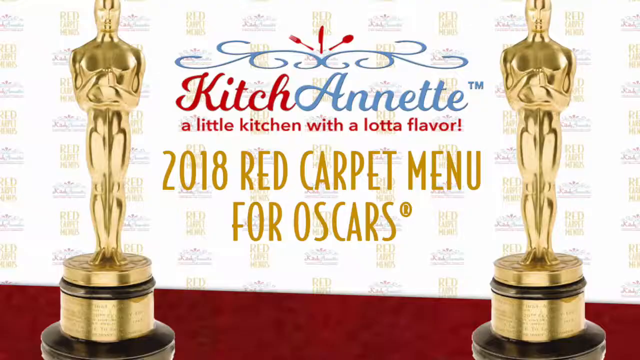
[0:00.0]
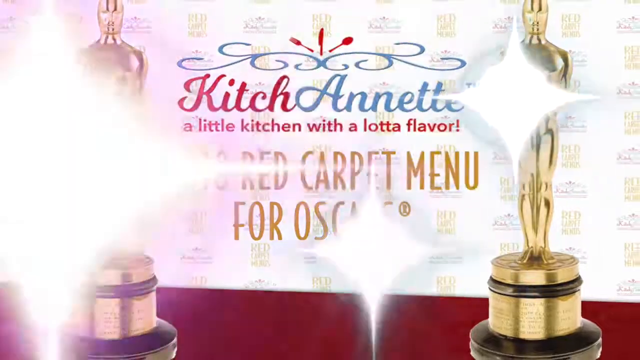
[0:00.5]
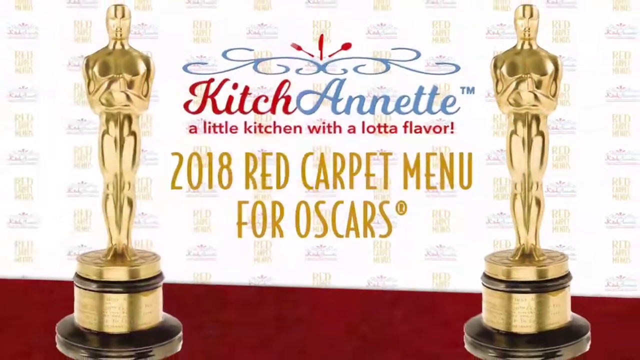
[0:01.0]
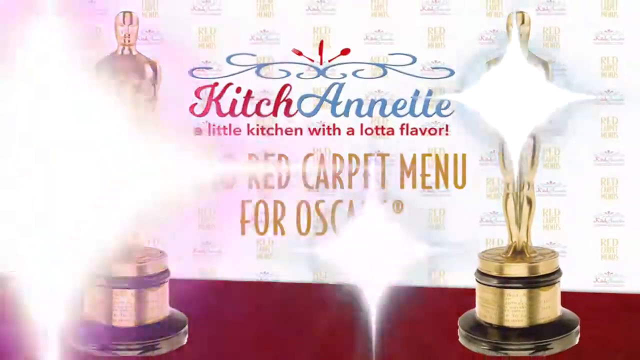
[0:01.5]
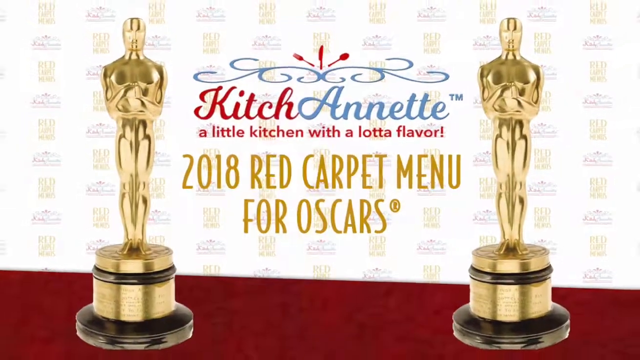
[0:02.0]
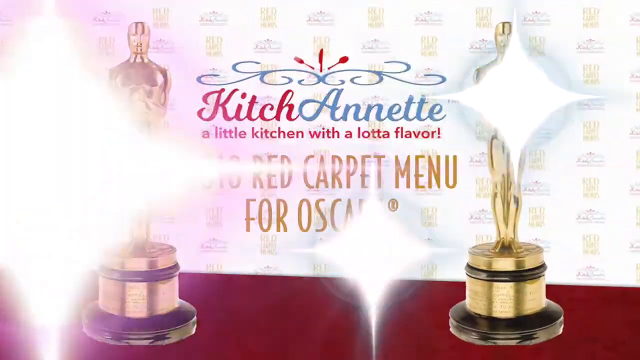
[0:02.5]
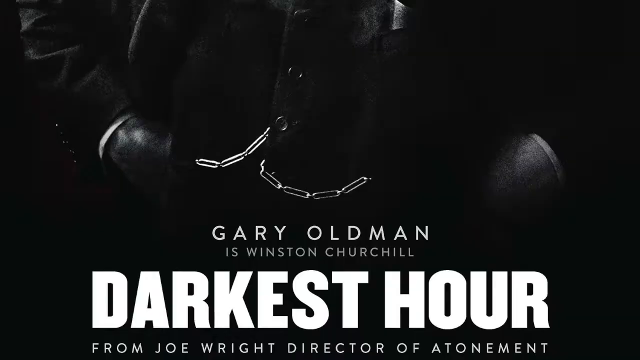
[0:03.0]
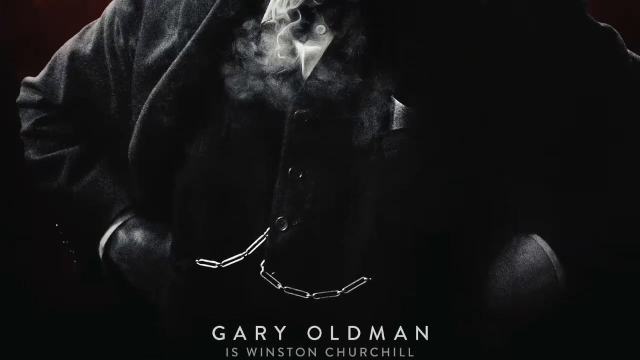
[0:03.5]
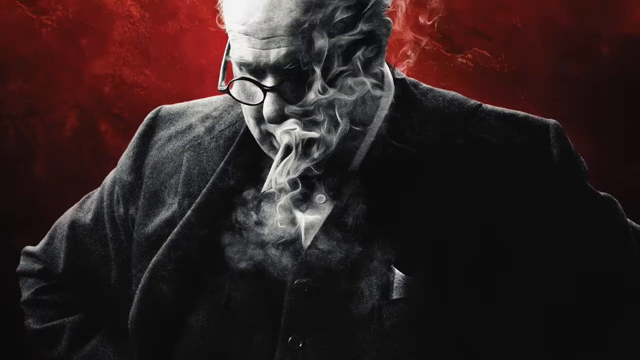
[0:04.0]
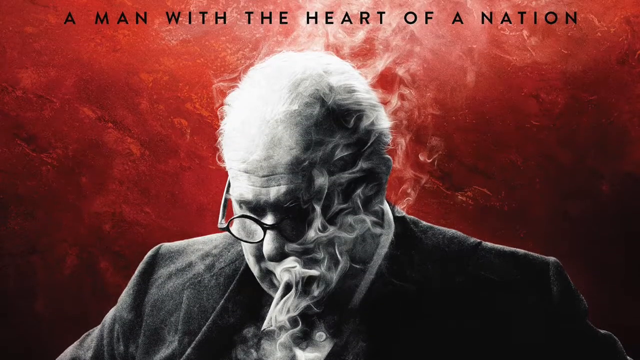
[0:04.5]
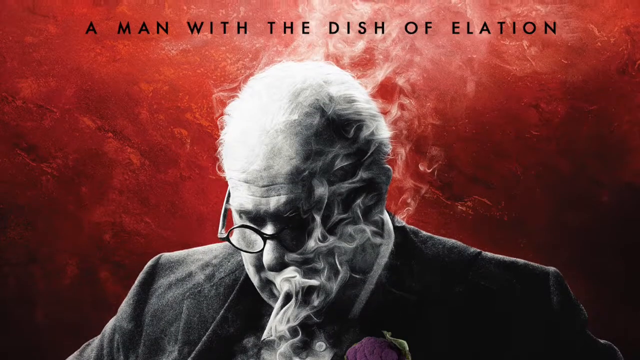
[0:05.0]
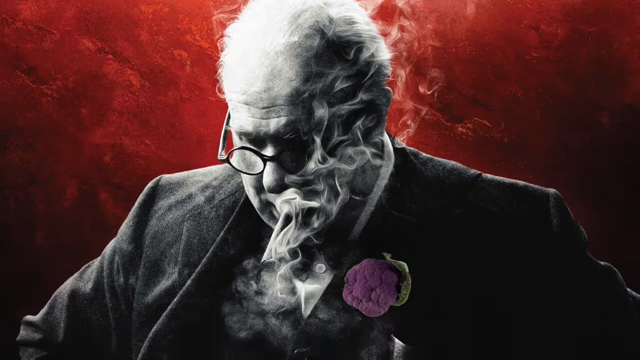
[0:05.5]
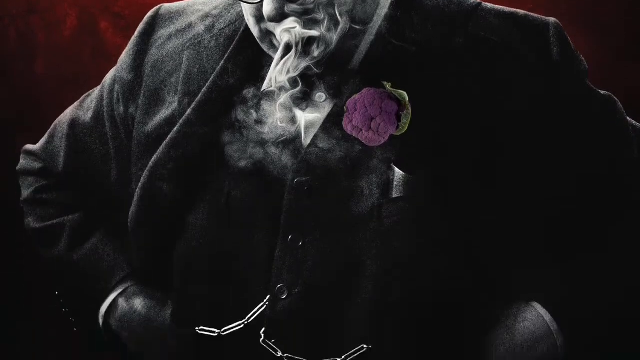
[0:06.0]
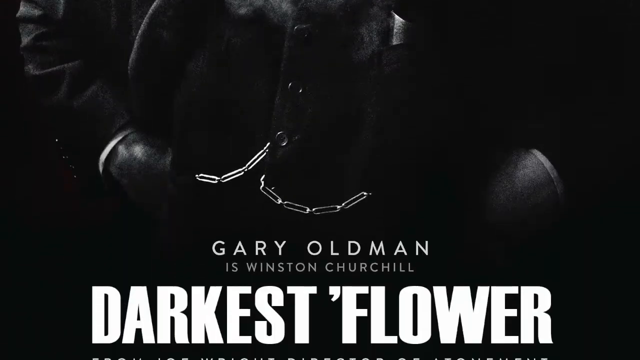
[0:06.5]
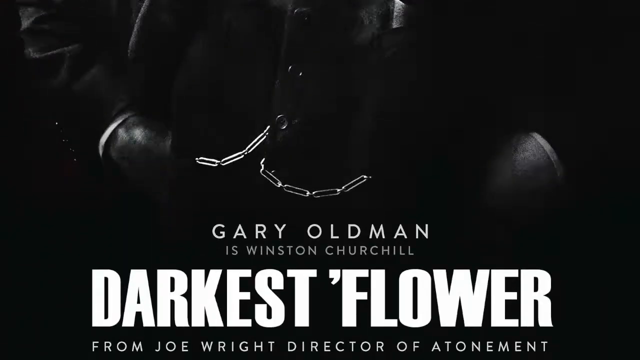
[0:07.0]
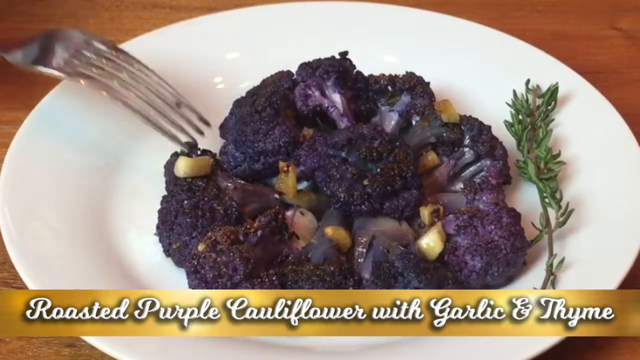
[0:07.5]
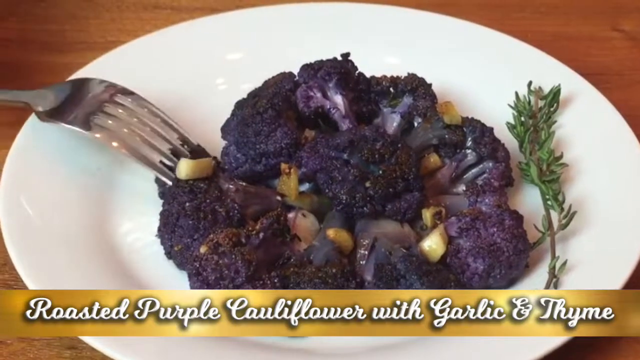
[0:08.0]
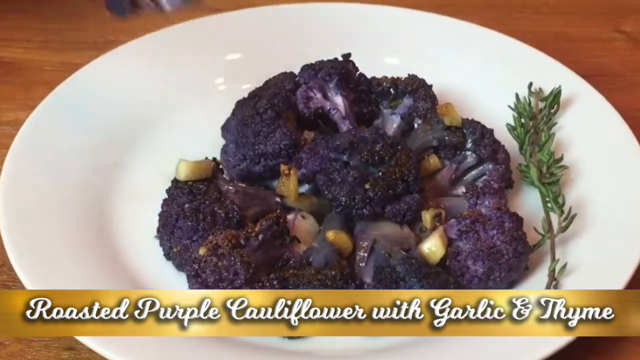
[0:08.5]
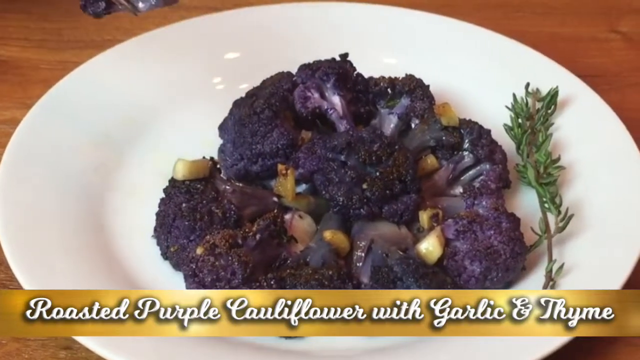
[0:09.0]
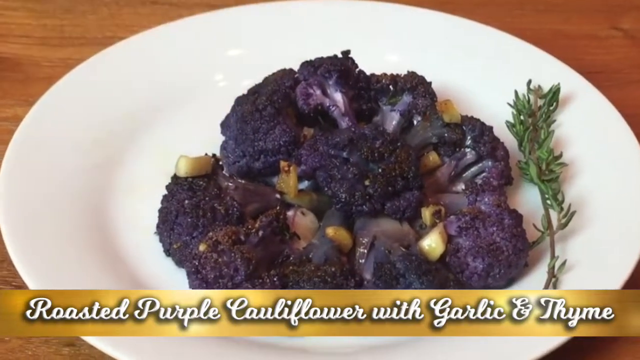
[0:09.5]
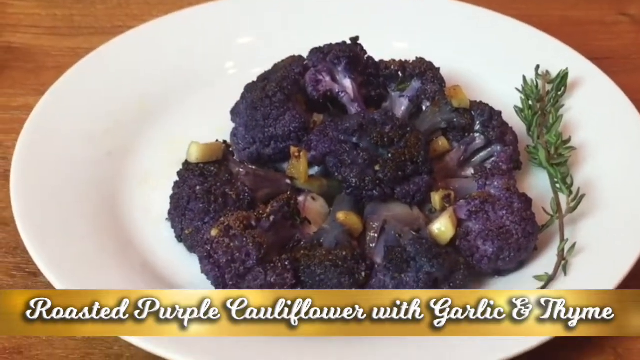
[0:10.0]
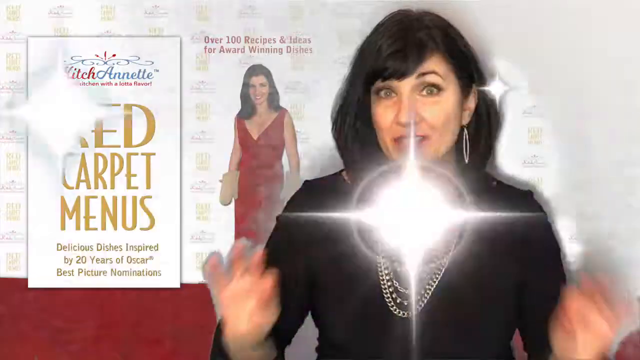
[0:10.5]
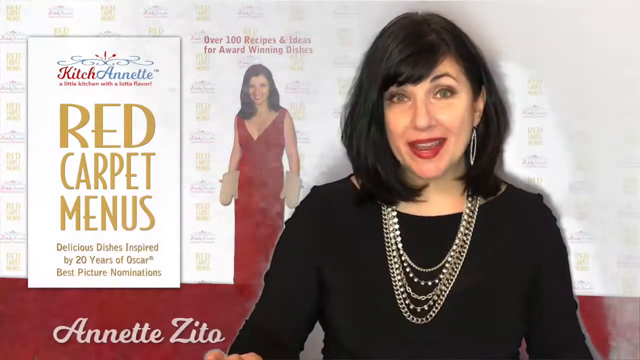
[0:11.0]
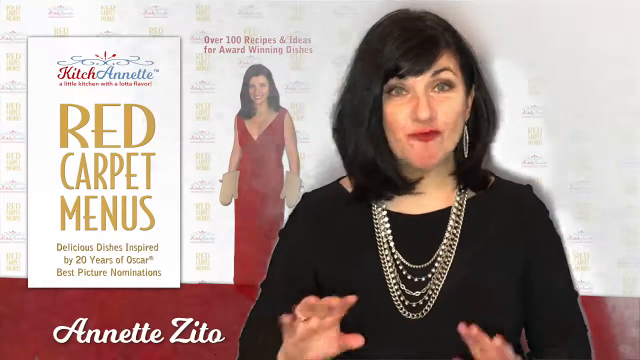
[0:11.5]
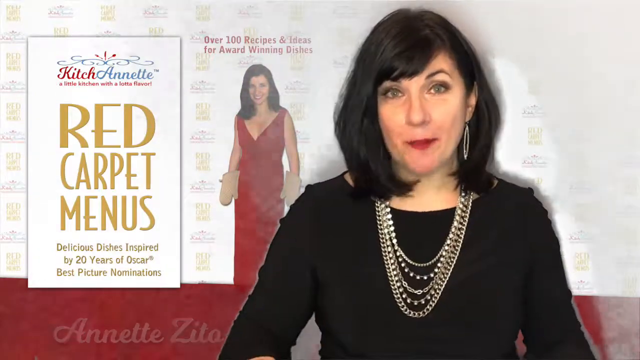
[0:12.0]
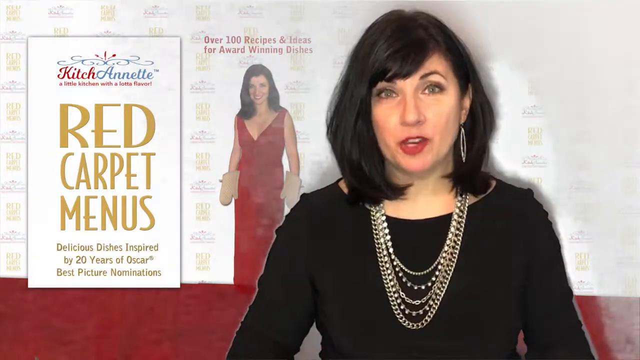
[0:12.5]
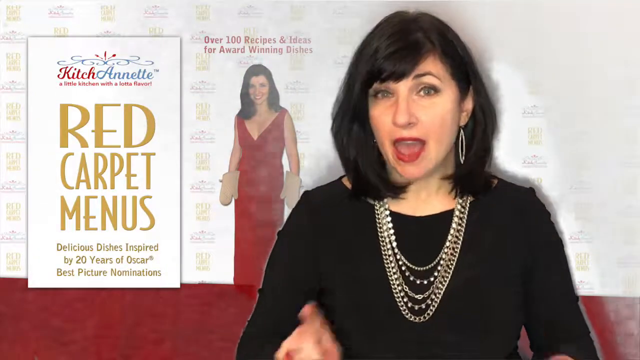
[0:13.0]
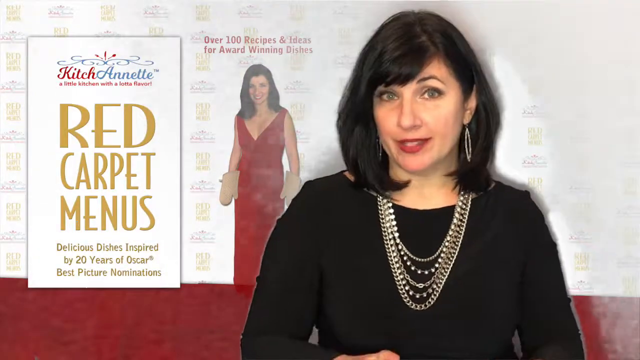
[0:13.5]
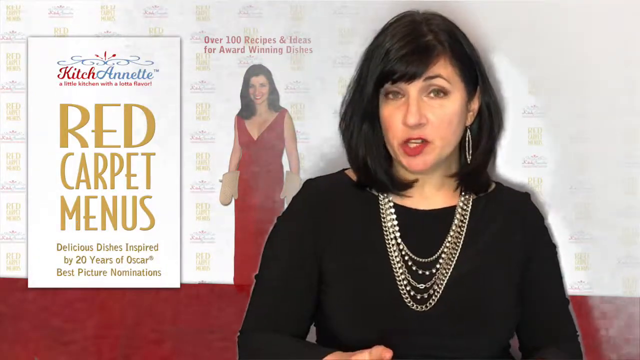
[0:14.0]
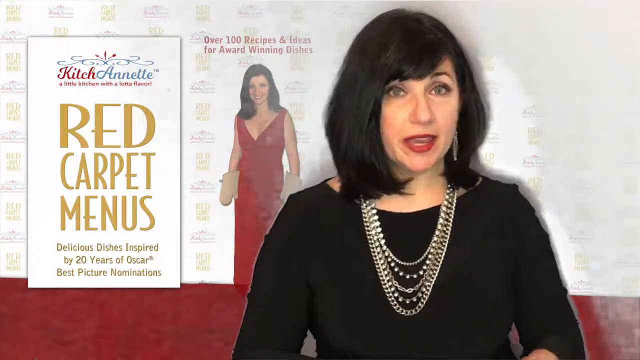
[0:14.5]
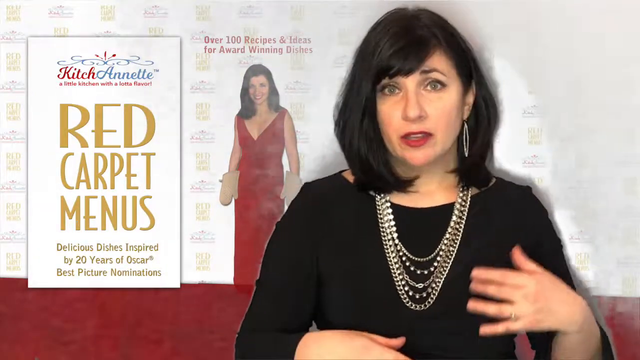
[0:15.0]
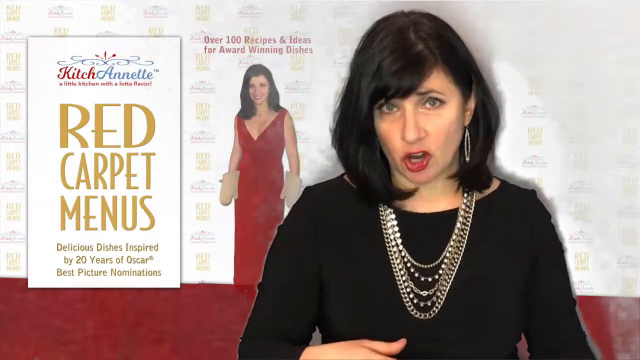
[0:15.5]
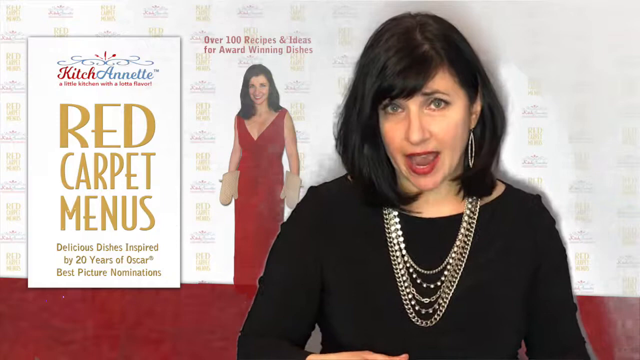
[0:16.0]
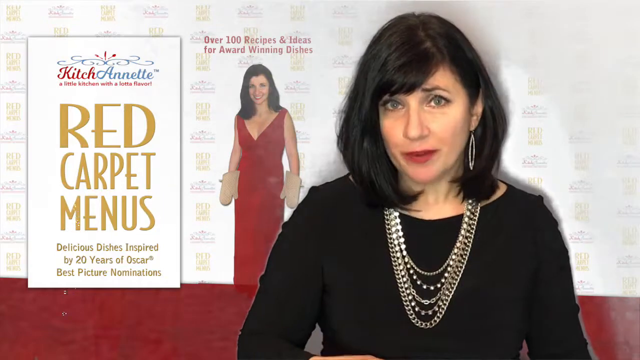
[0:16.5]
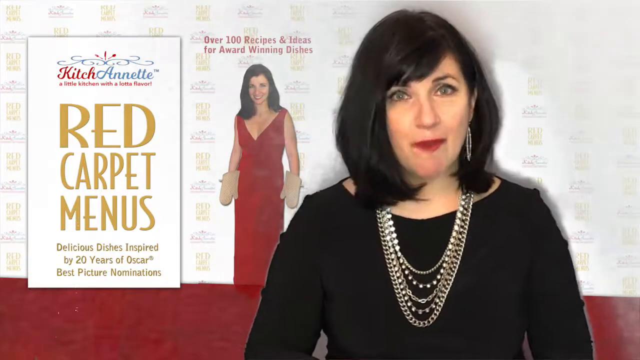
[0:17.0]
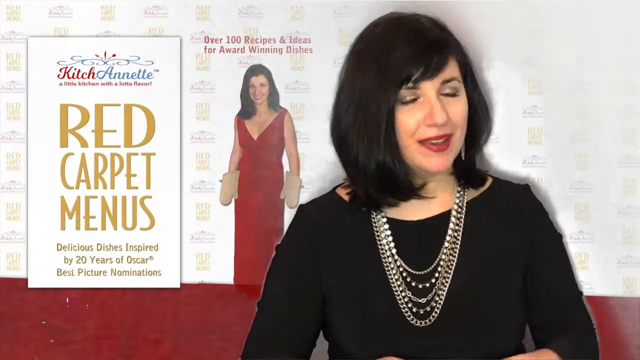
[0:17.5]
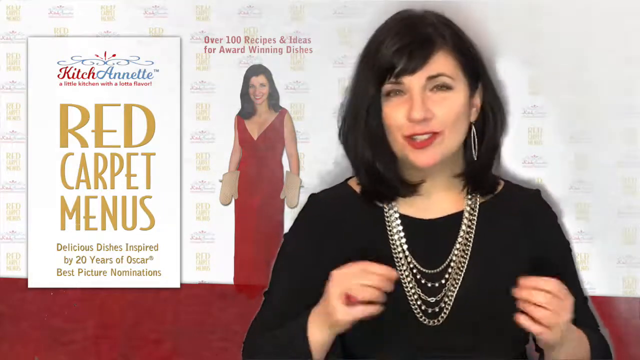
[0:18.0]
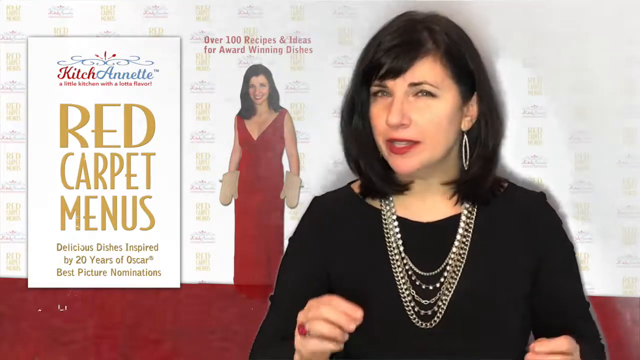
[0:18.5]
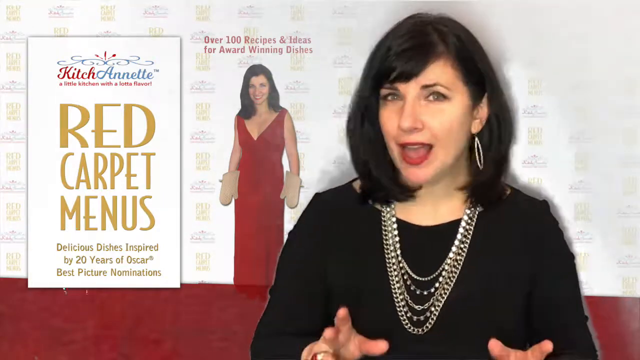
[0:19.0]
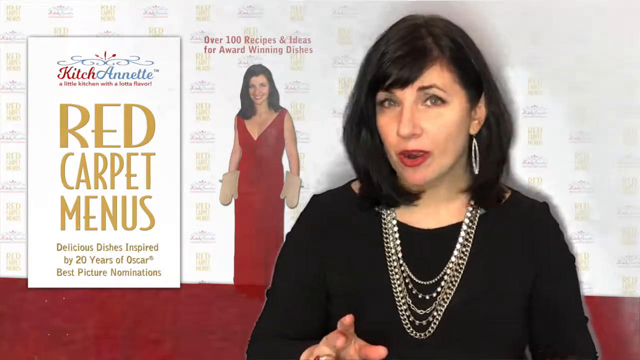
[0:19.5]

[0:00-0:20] The video opens on a kind of background with the Golden Globes, with a kind of red carpet at the bottom and some sort of logos in the background. It then transitions to a screen with a red, sort of maroonish red background showing an old man with a kind of smoke appearance. The man is probably 60 to 70 years old, with short, kind of gray hair, glasses and kind of a black suit. Text above him reads "a man with the heart of a nation". The view then pans down to another screen showing roasted purple cauliflower with garlic and thyme presented on a dish. Next comes a screen with a kind of middle-aged woman wearing beads, with black hair and a black dress, and red carpet menus to the left of her. She is shown talking.